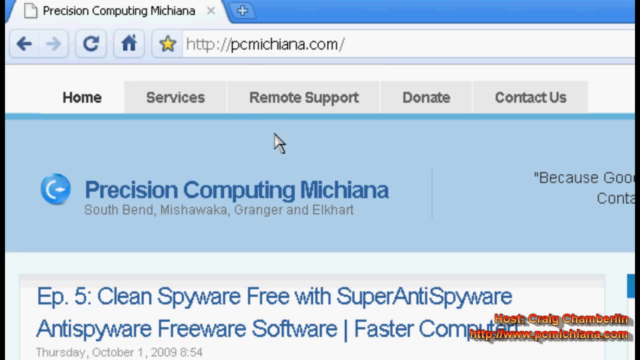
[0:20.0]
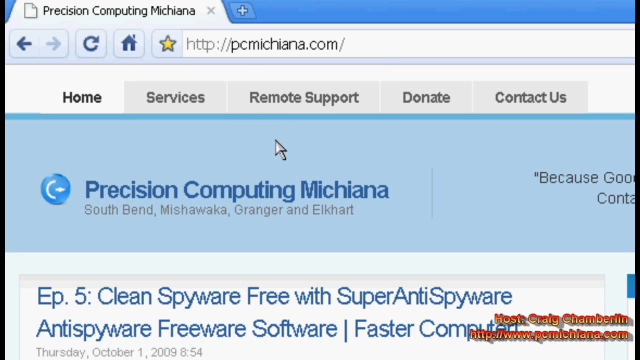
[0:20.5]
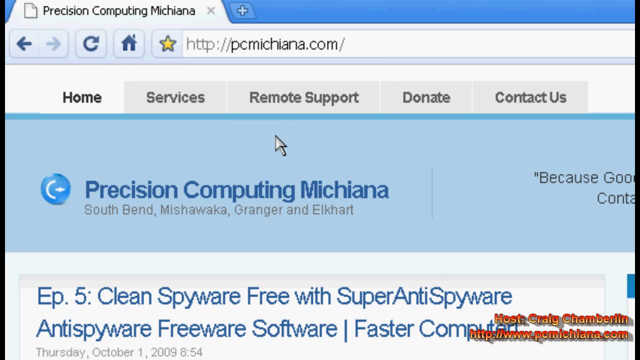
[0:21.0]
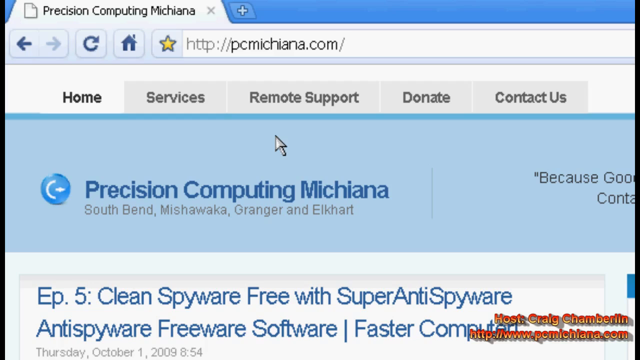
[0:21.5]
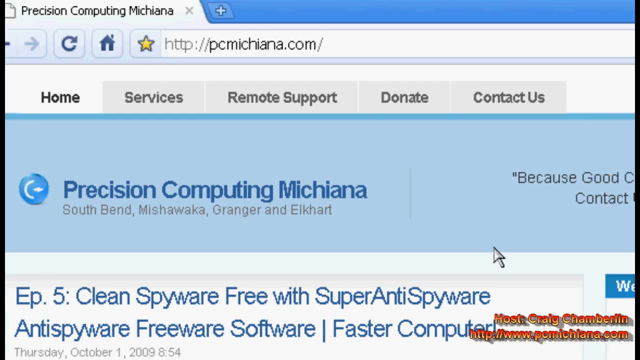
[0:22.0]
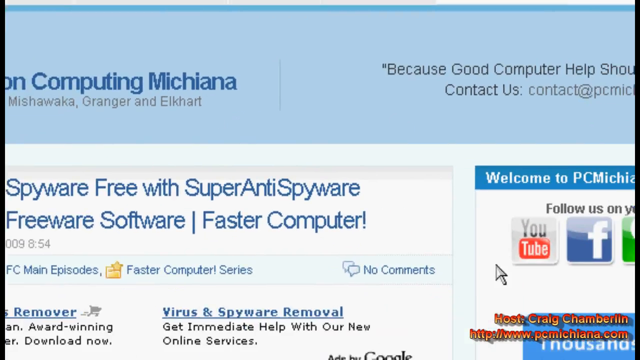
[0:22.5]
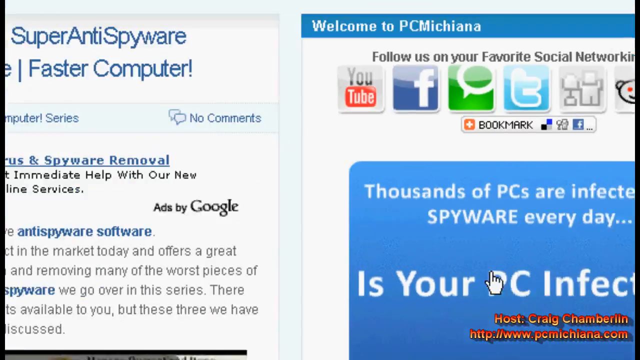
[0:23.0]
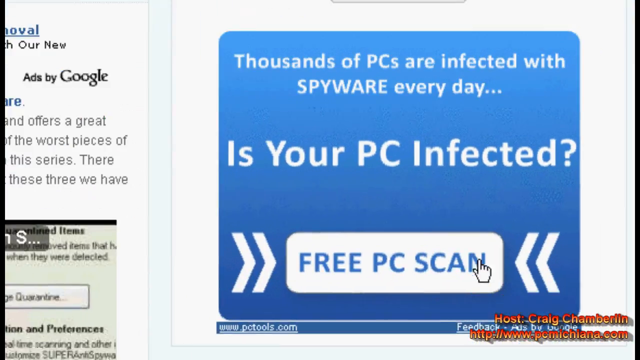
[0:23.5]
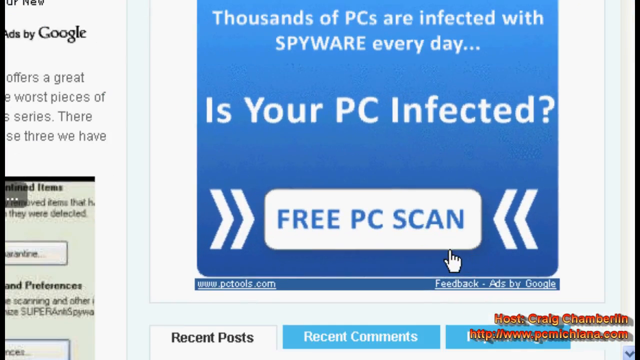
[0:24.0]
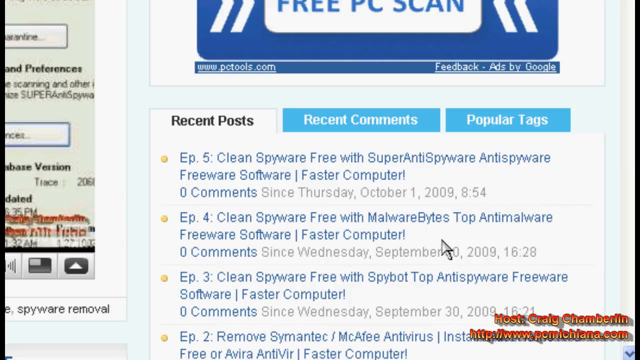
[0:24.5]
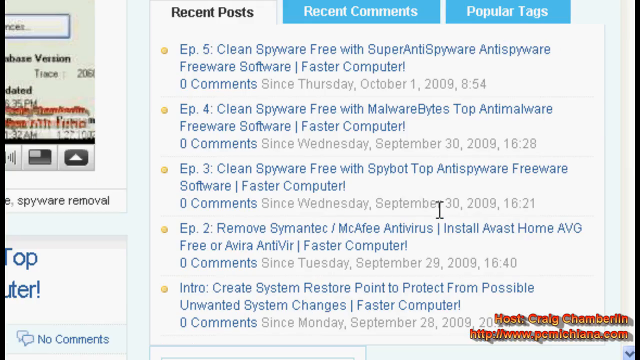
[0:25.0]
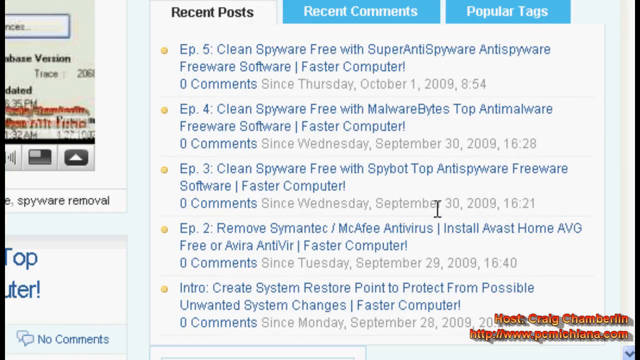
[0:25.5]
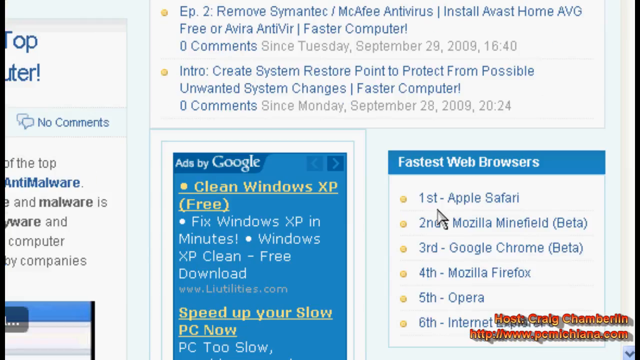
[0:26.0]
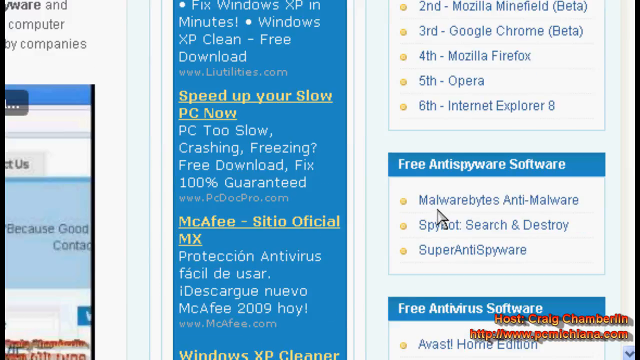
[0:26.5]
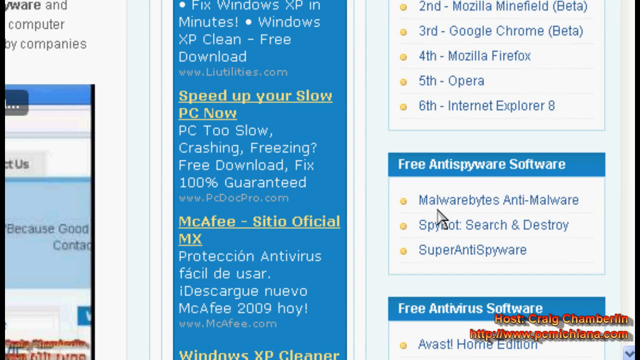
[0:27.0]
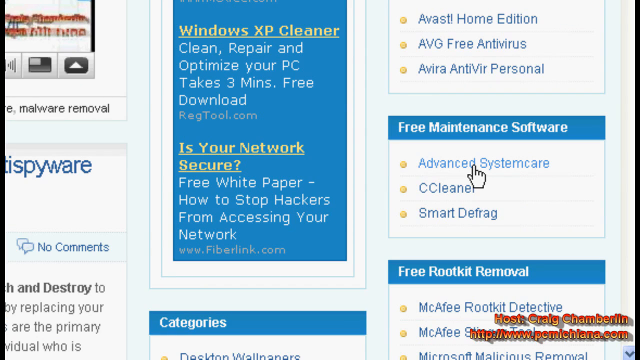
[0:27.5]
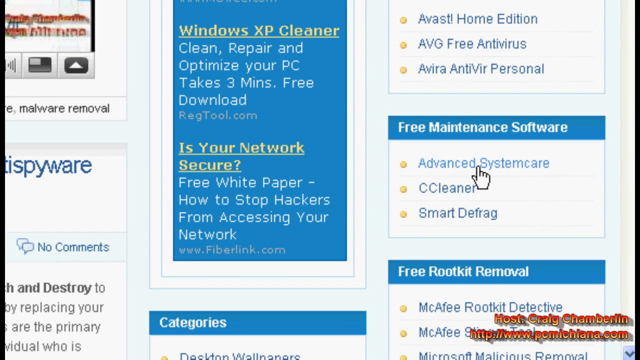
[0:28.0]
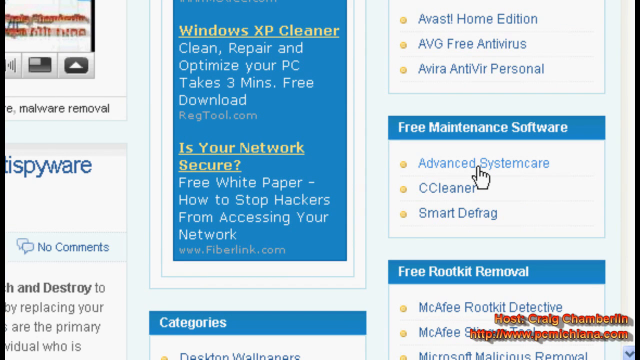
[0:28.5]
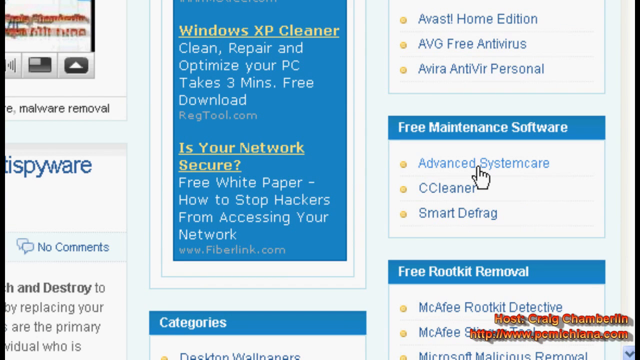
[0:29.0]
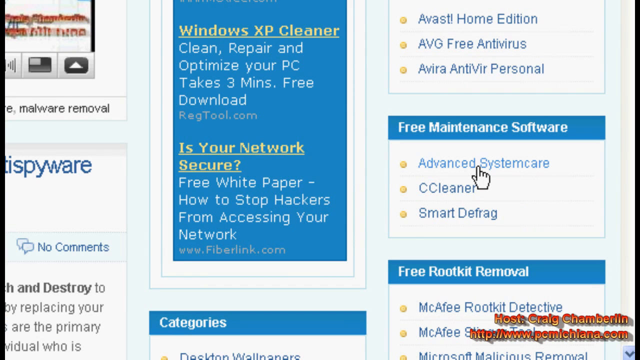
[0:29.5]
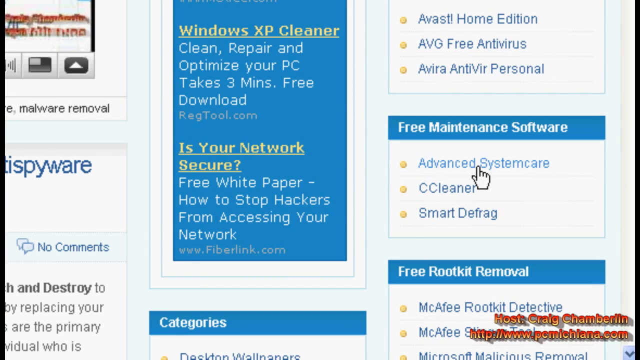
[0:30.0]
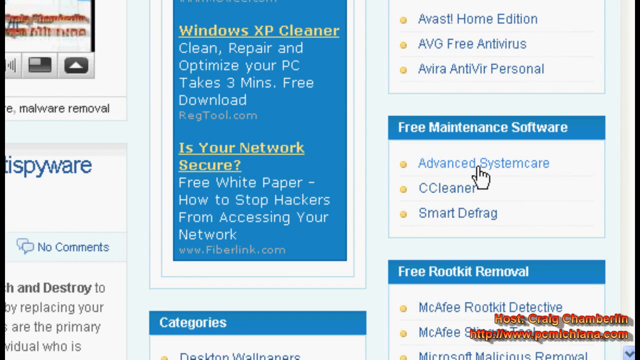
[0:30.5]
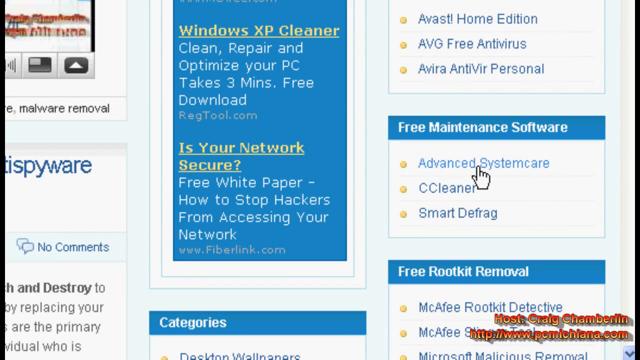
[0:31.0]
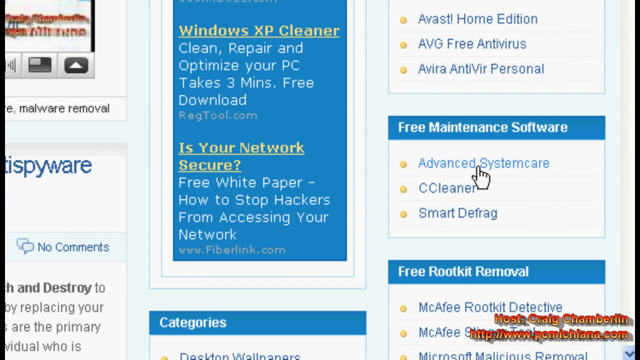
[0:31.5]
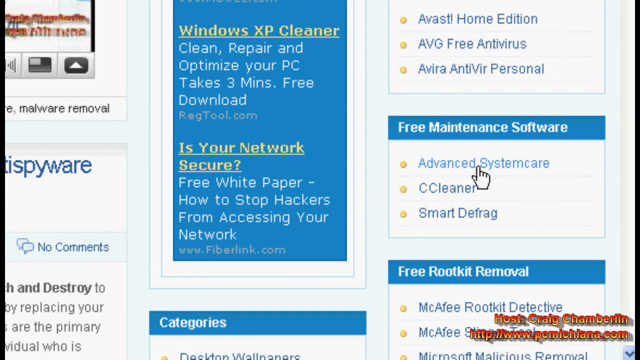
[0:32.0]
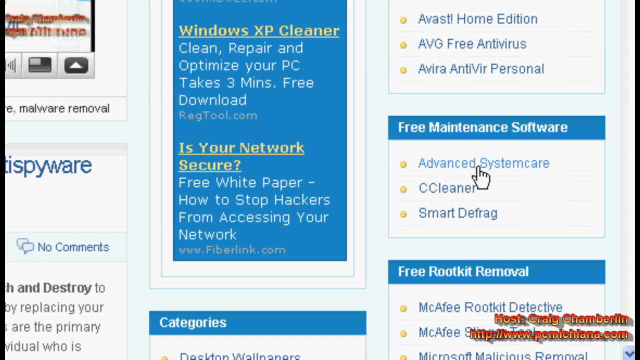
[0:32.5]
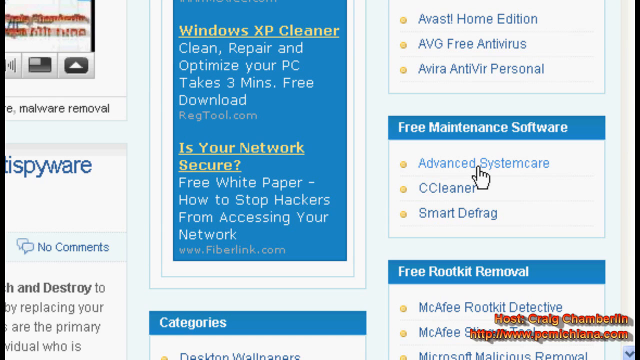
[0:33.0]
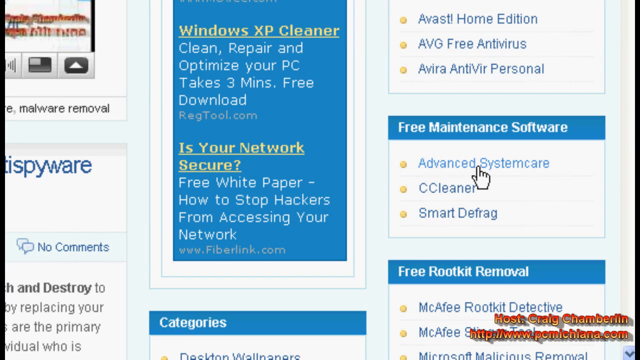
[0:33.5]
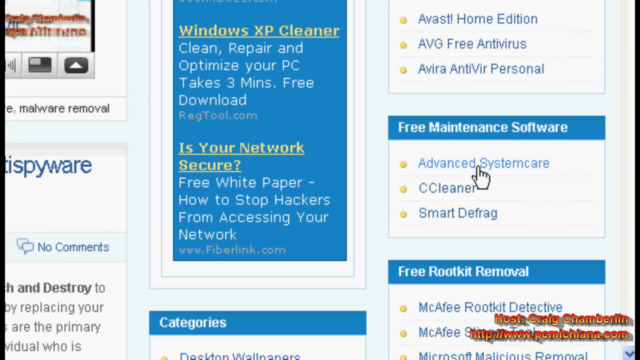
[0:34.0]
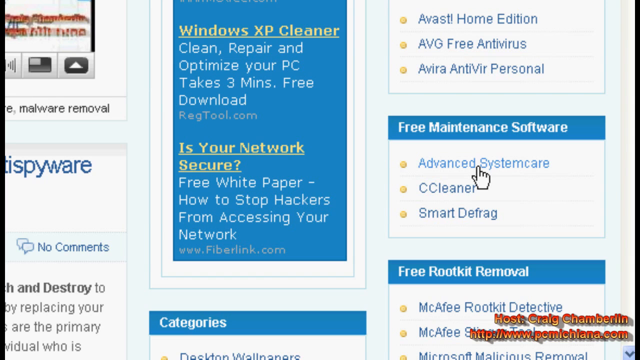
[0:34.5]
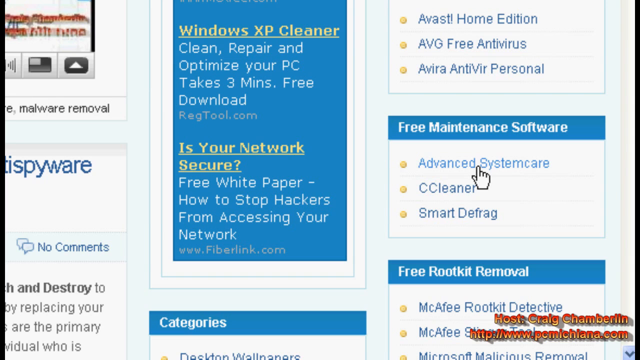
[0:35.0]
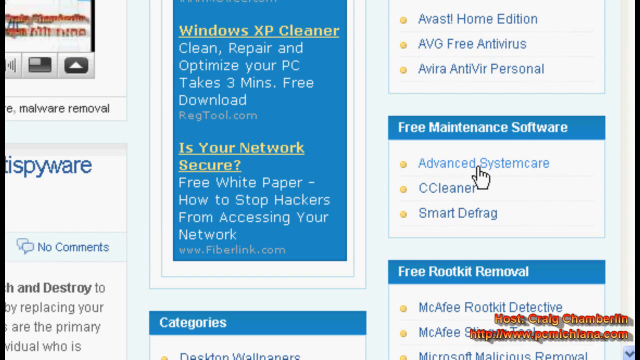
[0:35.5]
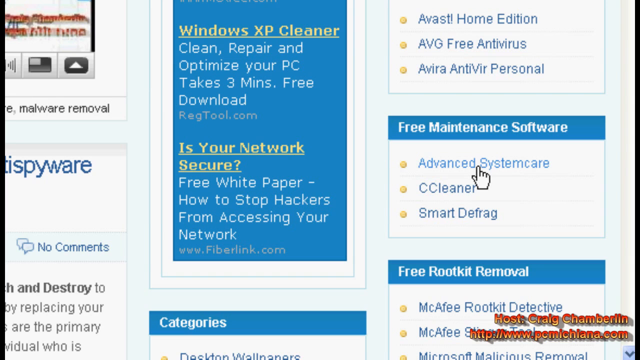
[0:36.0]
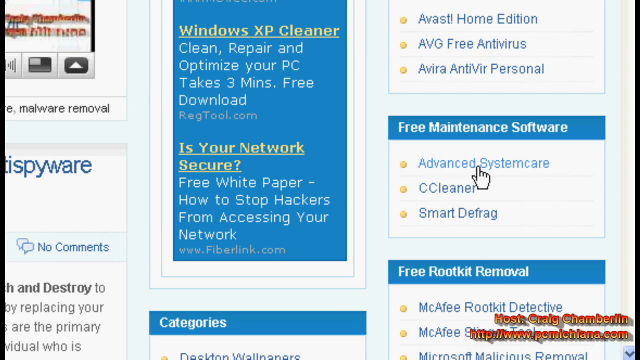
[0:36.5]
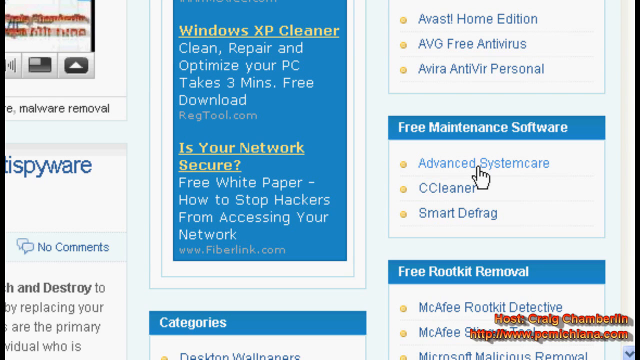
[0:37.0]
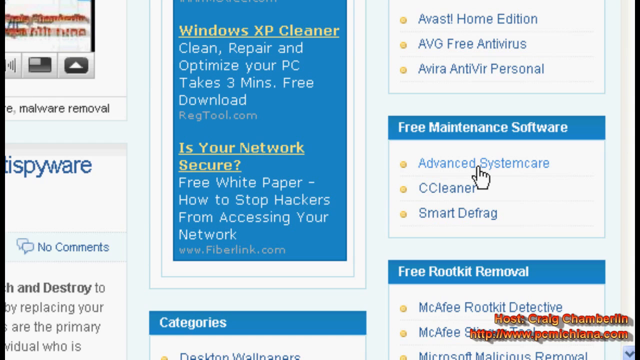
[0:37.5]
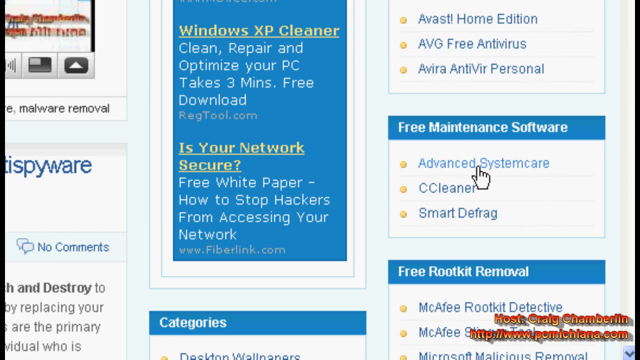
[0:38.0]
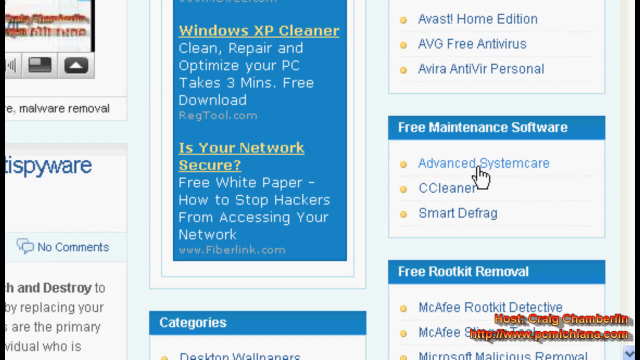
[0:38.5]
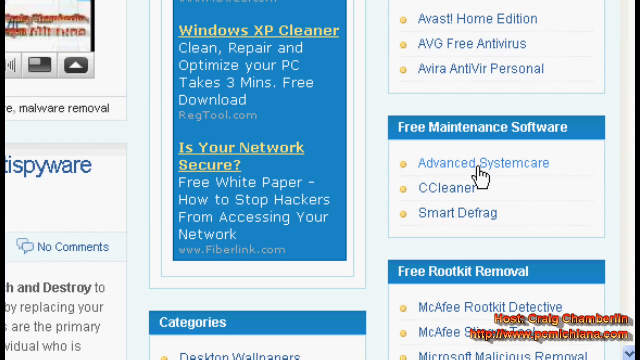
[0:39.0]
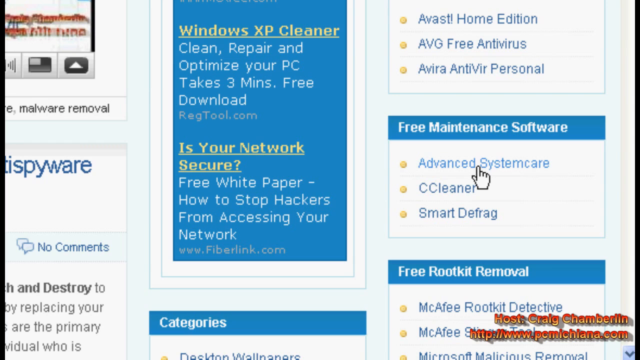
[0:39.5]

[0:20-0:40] The view remains on the Precision Computing Michiana website, with a folder tab open on the page. Below, although this is episode six, there is a reference to episode five, titled "Clean Spyware Free with Super Anti-Spyware." The site appears to be a spyware website. Blue bold lettering appears along with the tabs, including the favorites bar and the home screen. The cursor moves over and clicks a free PC computer scan, then moves down and clicks "advanced system care," shown in white text under the free maintenance center section of the website.